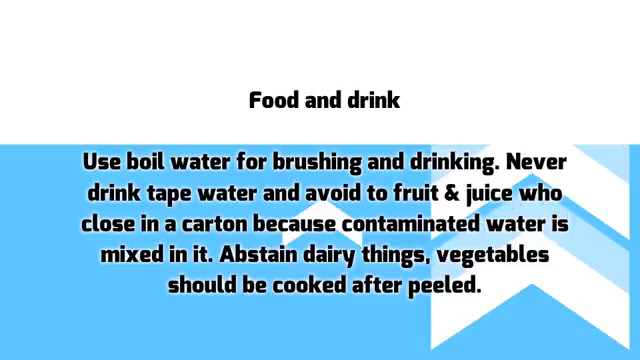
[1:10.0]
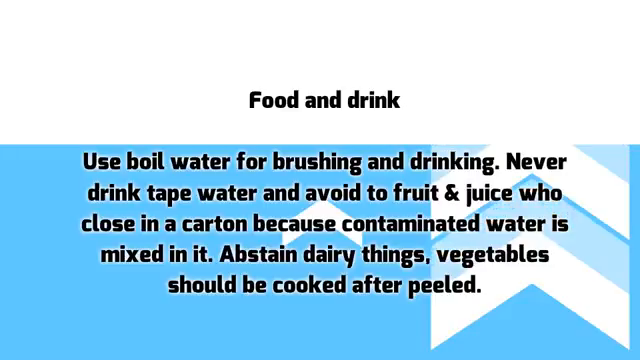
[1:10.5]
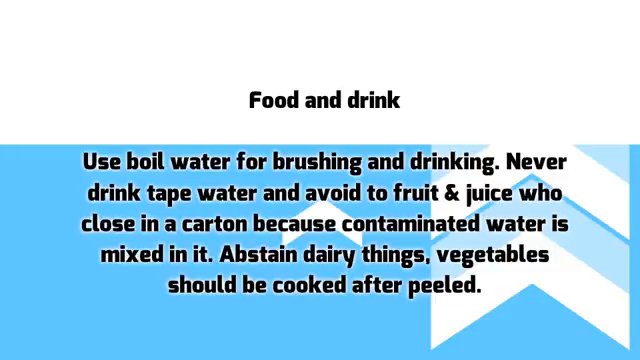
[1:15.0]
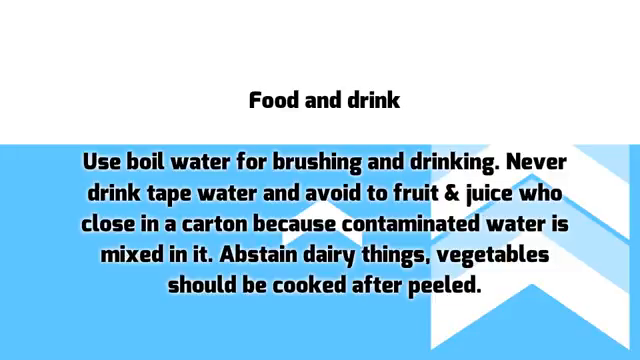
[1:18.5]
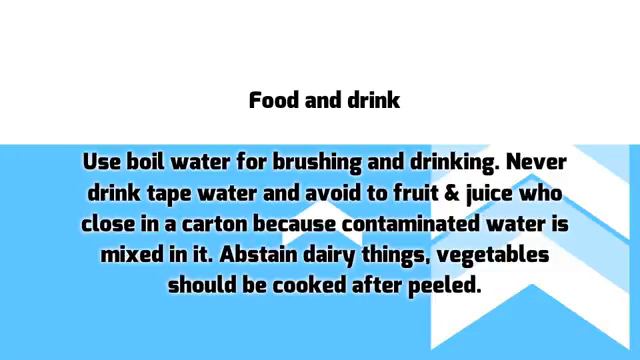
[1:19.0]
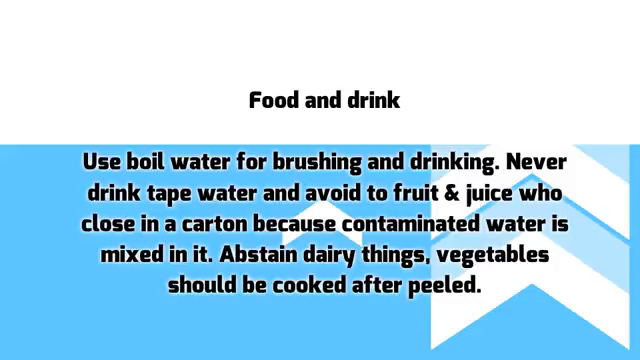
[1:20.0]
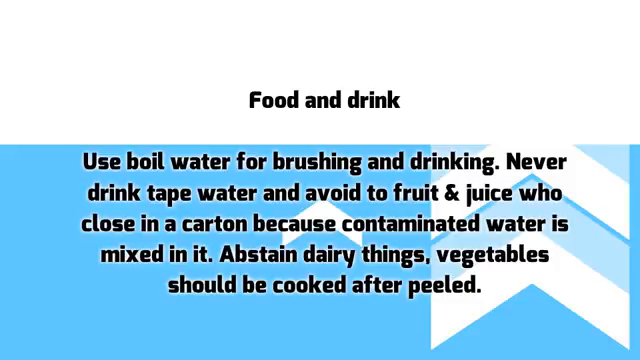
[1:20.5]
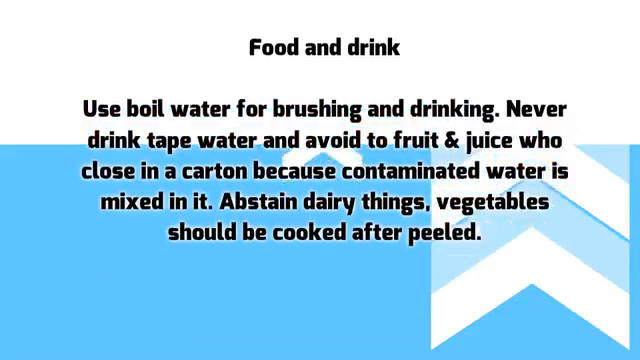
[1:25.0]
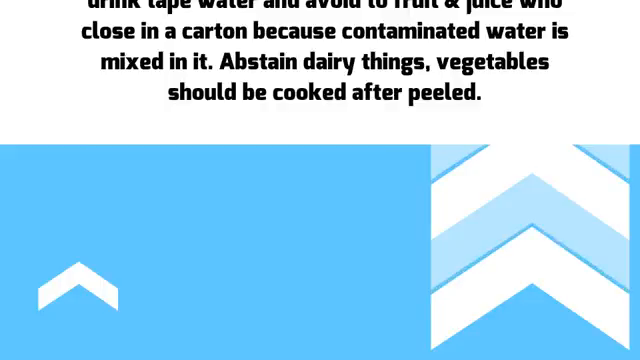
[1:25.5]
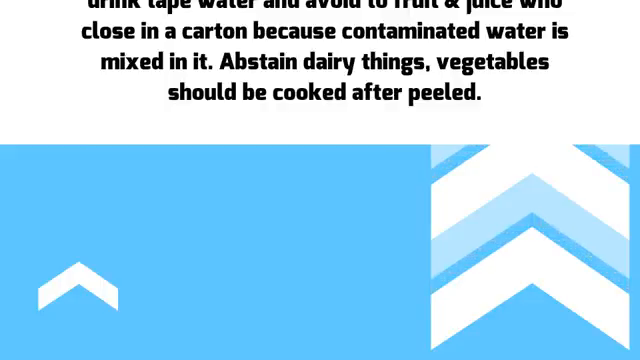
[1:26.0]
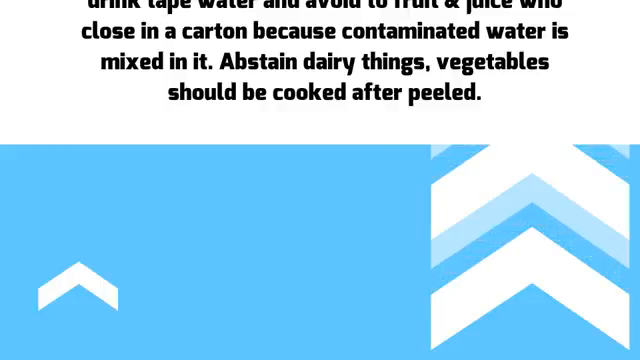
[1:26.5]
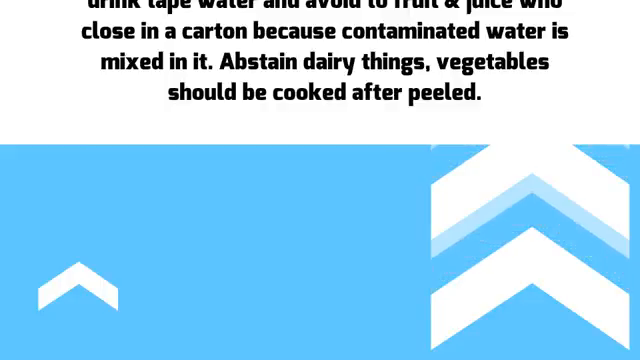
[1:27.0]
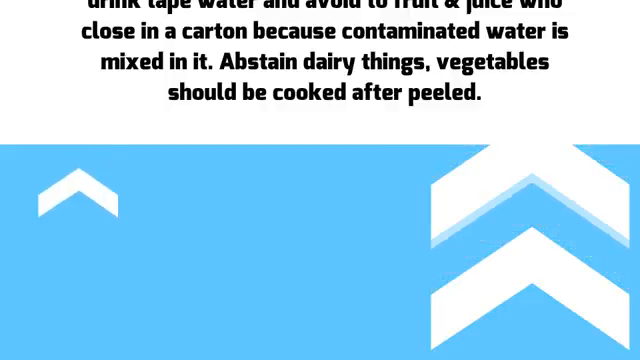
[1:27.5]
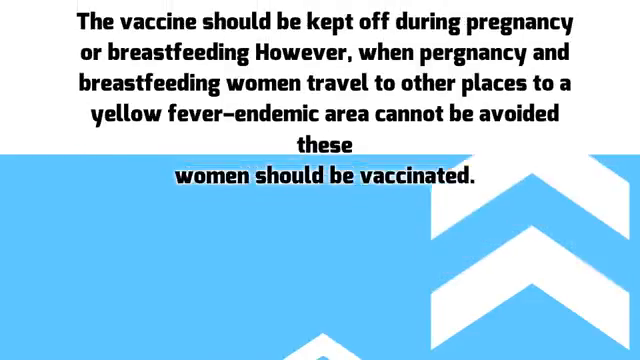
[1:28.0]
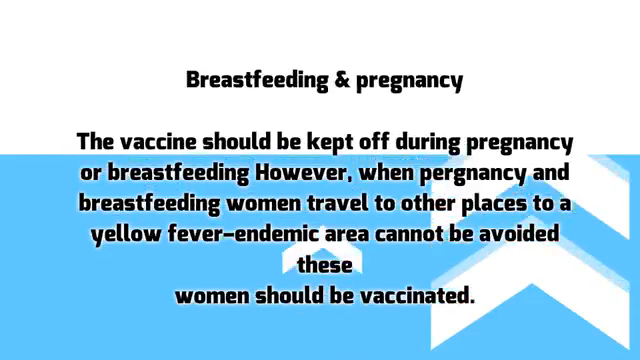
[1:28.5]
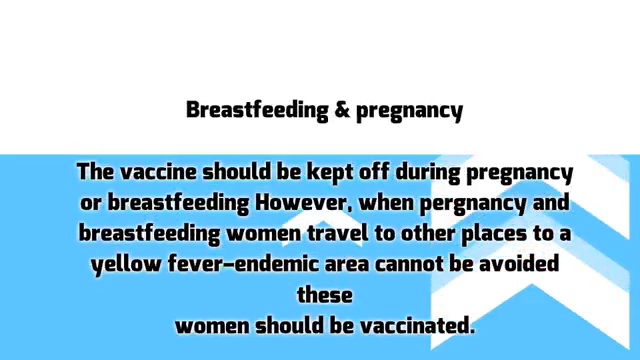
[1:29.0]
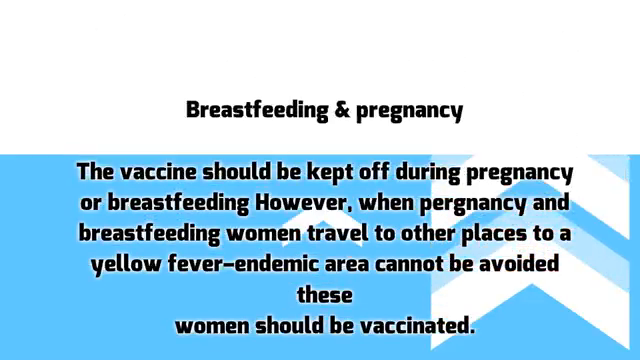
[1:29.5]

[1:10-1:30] The heading "food and drink" is still on screen, with the advice to use boiled water for brushing and drinking. Then more text swipes in from the top with the heading "breastfeed & pregnancy". It reads: "The vaccine should be kept off during pregnancy or breastfeeding. However, when pregnant and breastfeeding women travel to other places to a yellow fever endemic area, you cannot avoid it and you should be vaccinated." The food and drink screen then appears for the third time. The colors on screen are black, white and blue.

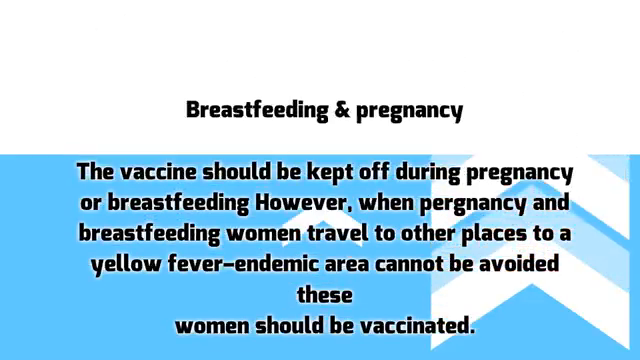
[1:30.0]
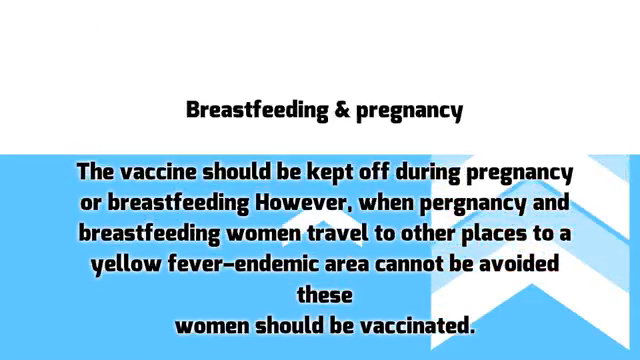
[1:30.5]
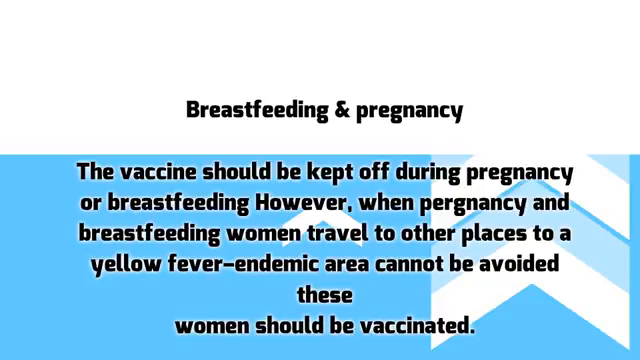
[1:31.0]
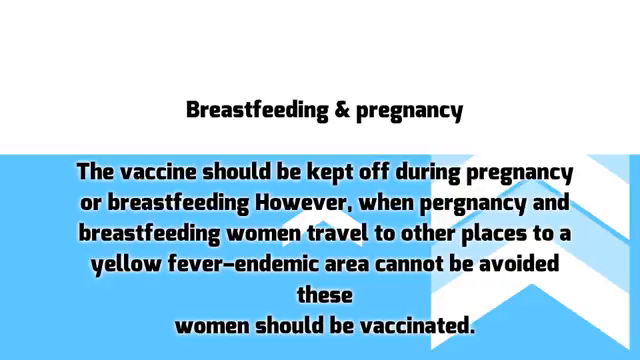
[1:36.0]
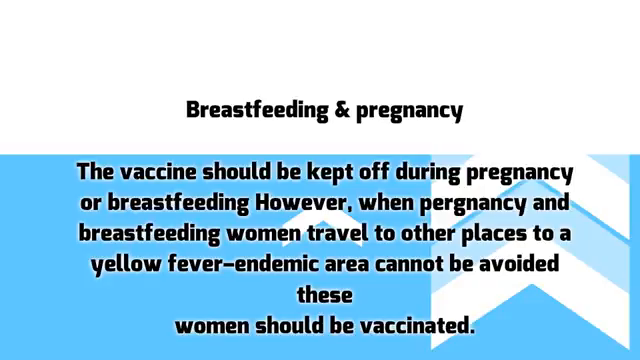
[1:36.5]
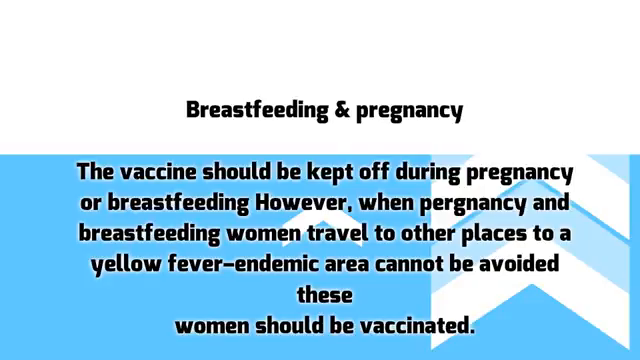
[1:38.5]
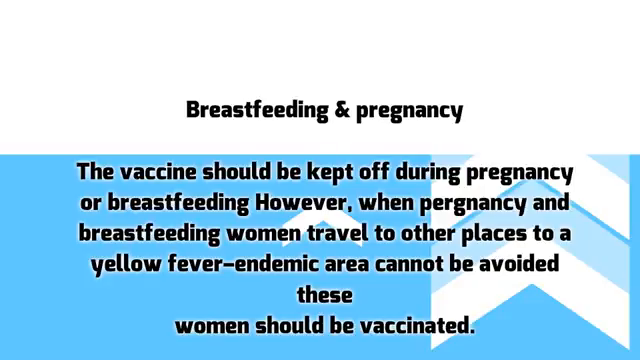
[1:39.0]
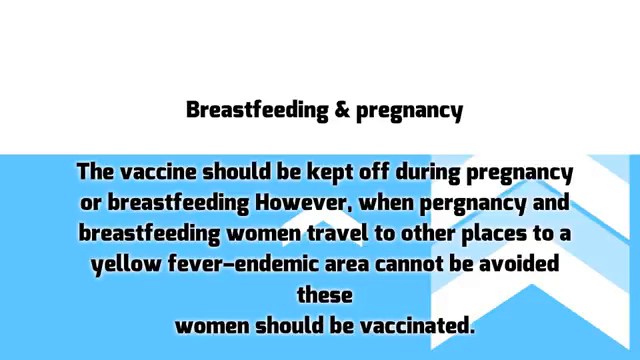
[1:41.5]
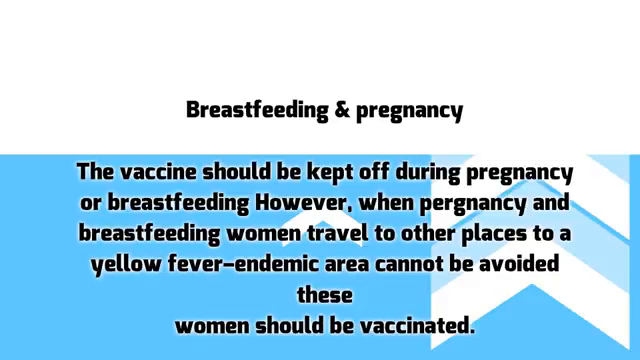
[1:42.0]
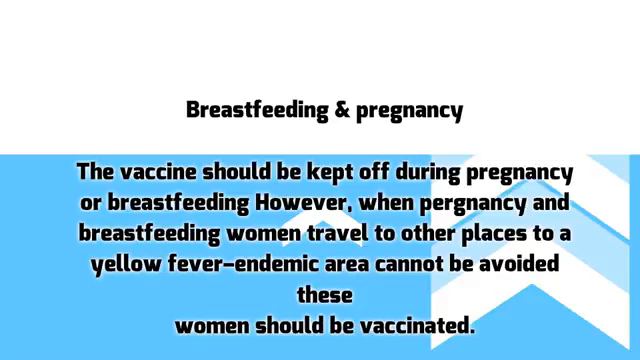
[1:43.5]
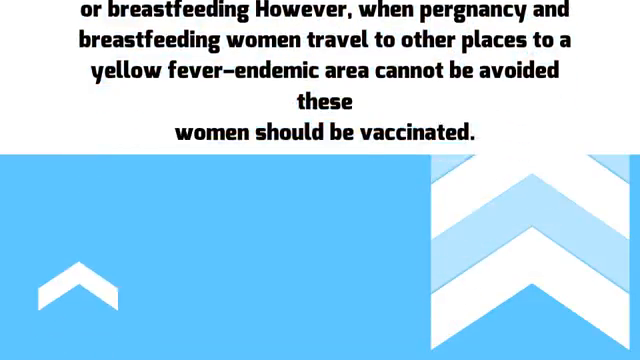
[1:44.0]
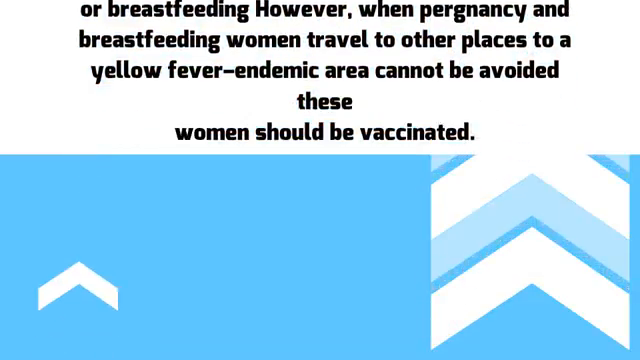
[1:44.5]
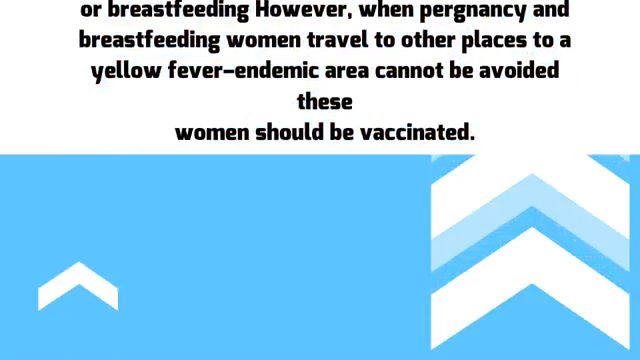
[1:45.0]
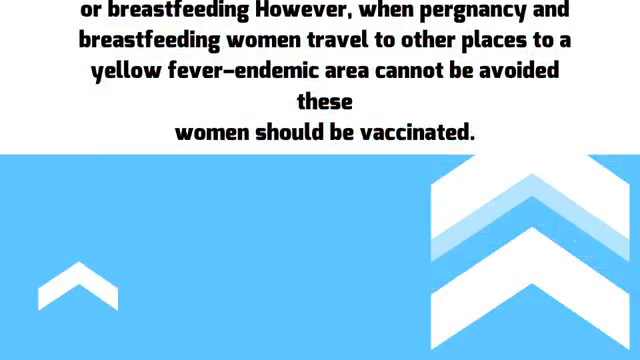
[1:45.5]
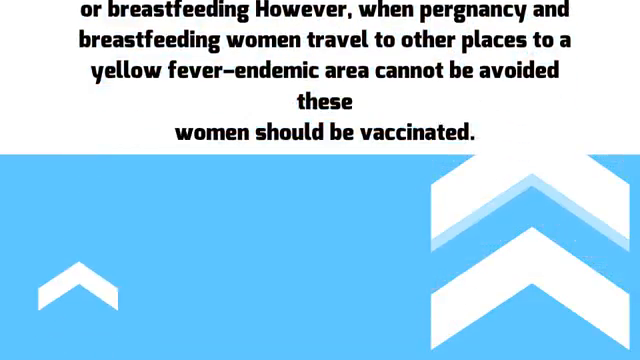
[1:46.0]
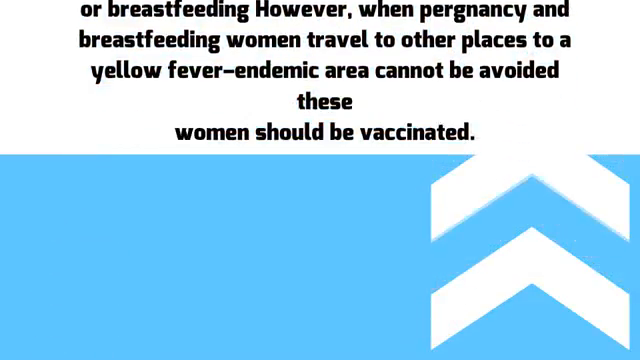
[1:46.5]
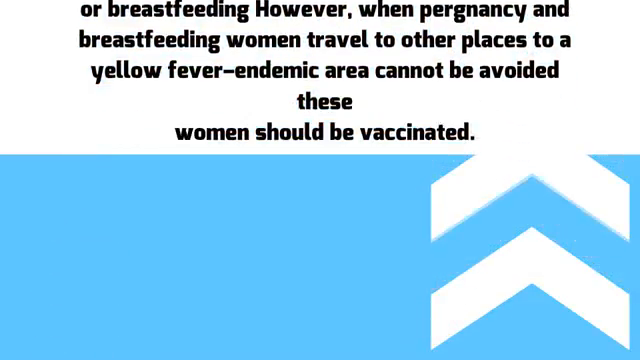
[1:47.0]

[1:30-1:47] The breastfeeding and pregnancy slide remains on the screen almost to the end, then swipes up, and the video ends abruptly without any sign that it is over, cutting off the slide.